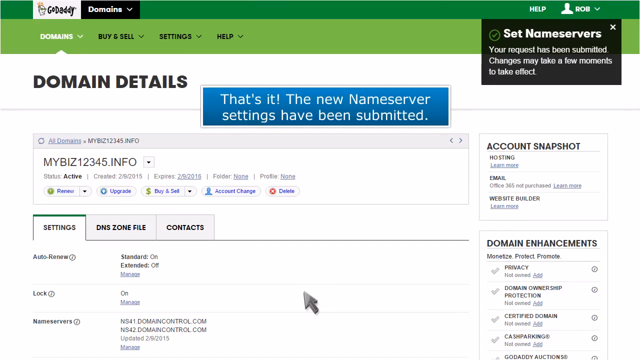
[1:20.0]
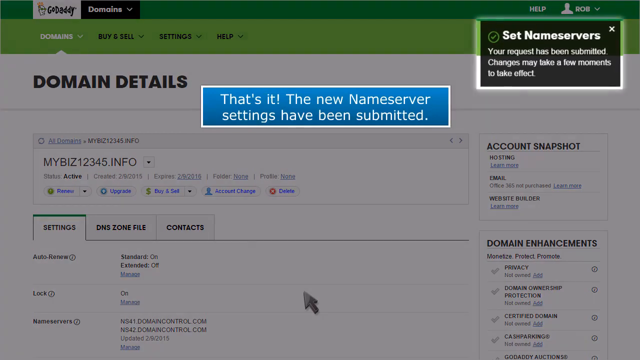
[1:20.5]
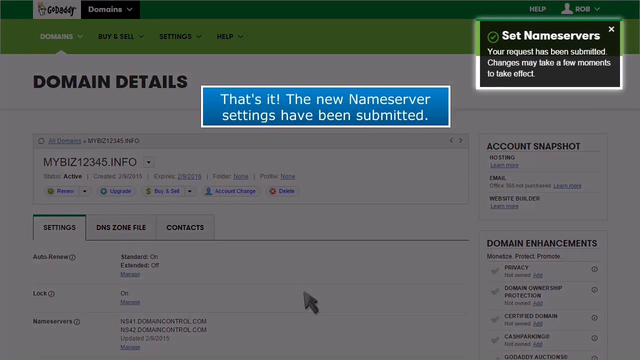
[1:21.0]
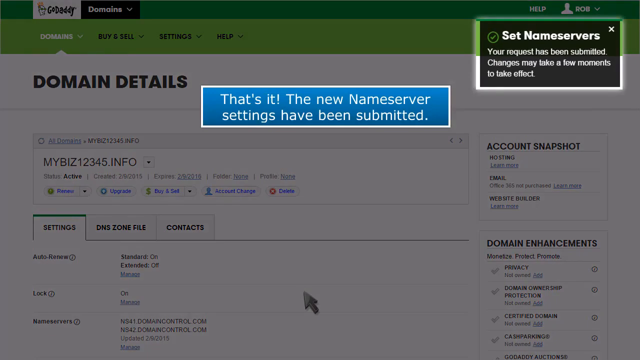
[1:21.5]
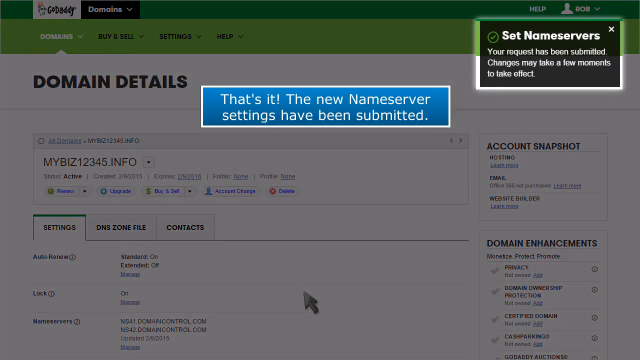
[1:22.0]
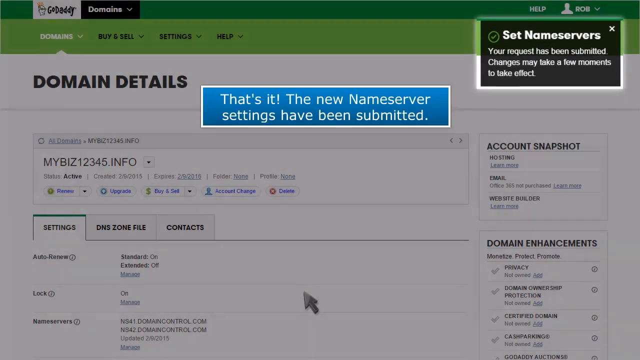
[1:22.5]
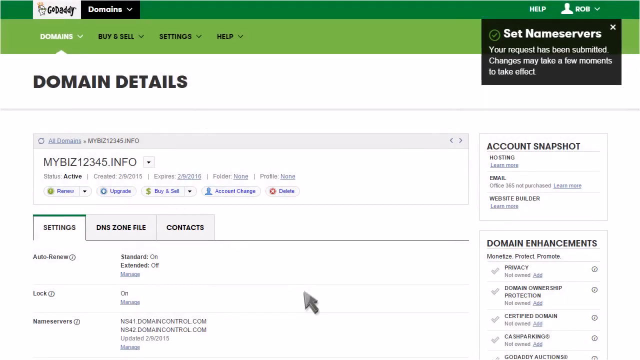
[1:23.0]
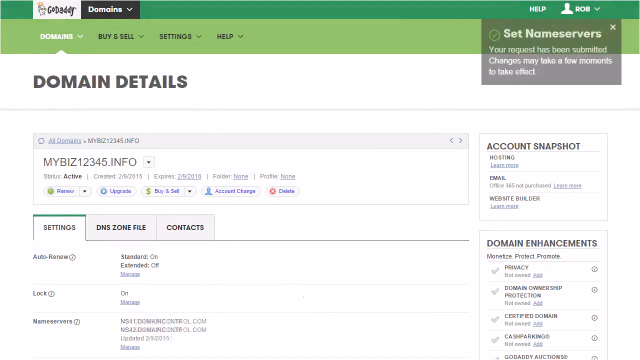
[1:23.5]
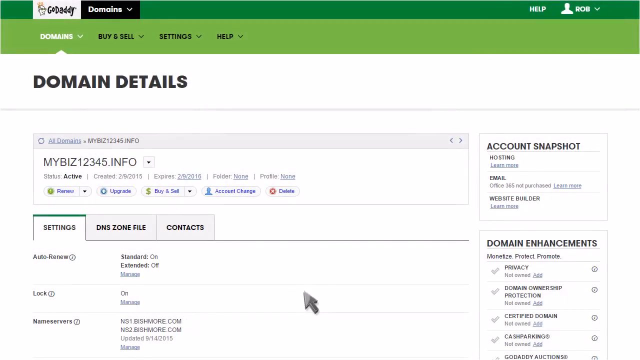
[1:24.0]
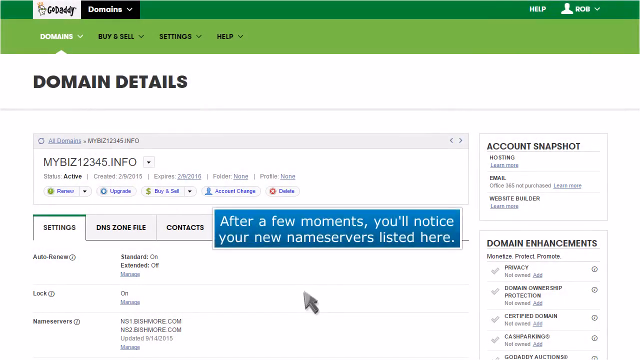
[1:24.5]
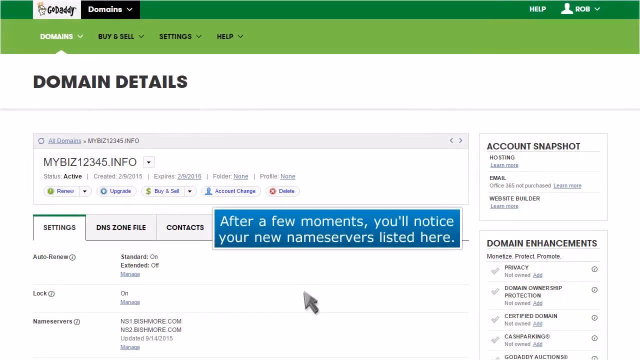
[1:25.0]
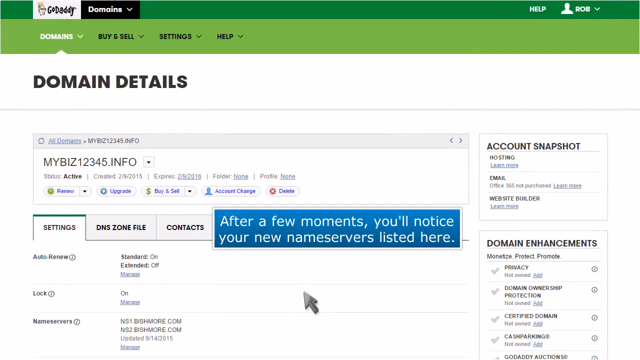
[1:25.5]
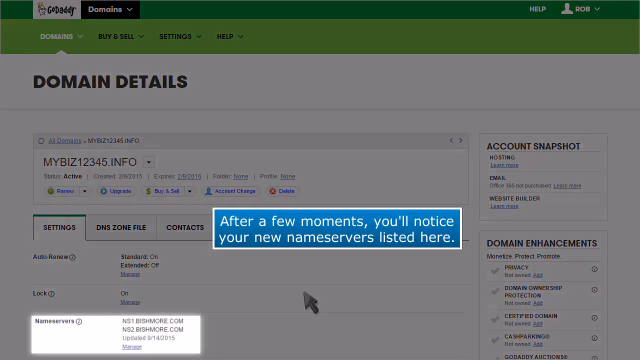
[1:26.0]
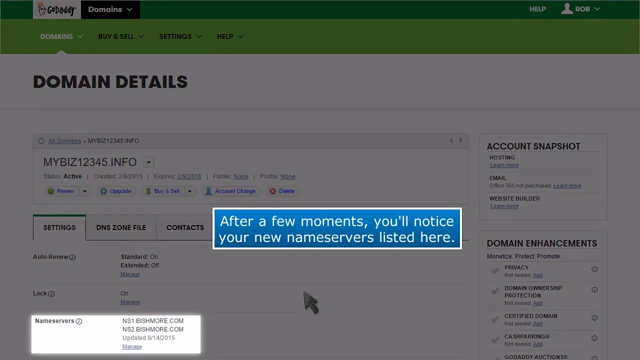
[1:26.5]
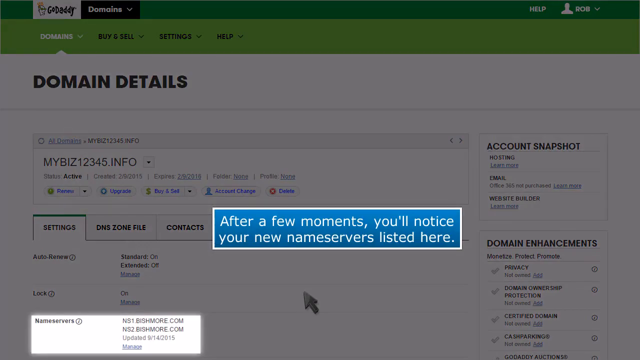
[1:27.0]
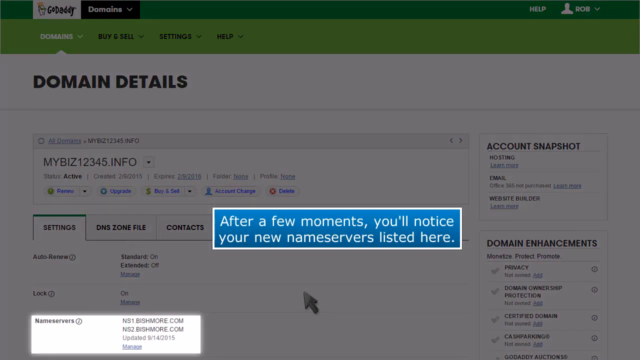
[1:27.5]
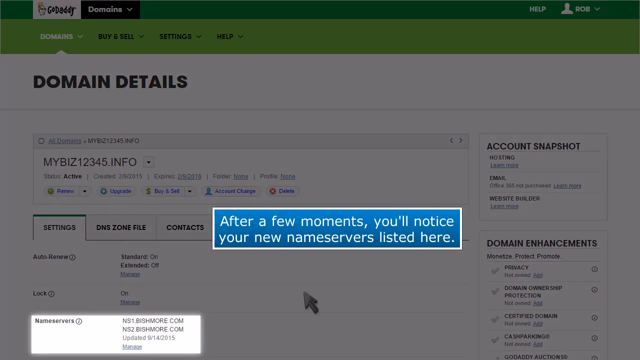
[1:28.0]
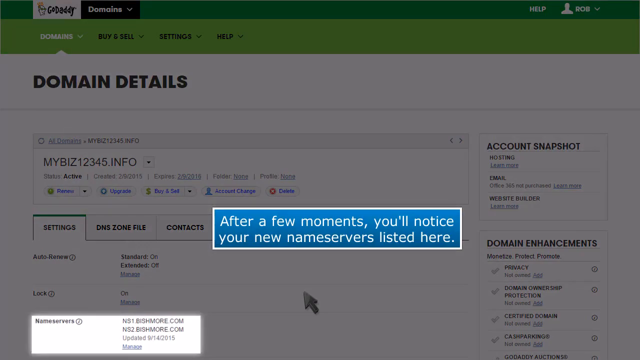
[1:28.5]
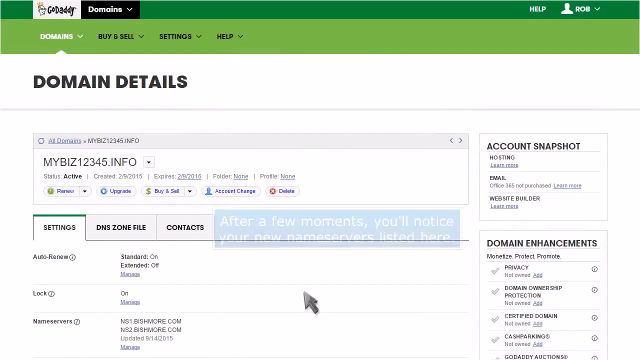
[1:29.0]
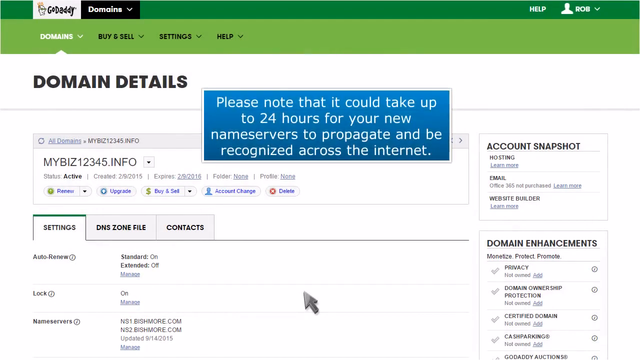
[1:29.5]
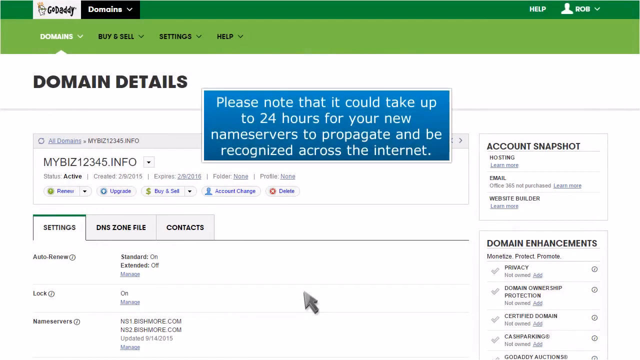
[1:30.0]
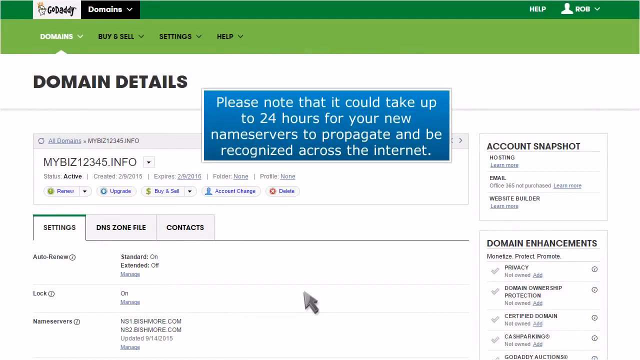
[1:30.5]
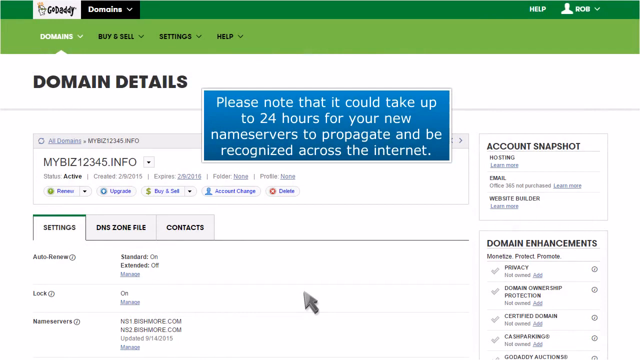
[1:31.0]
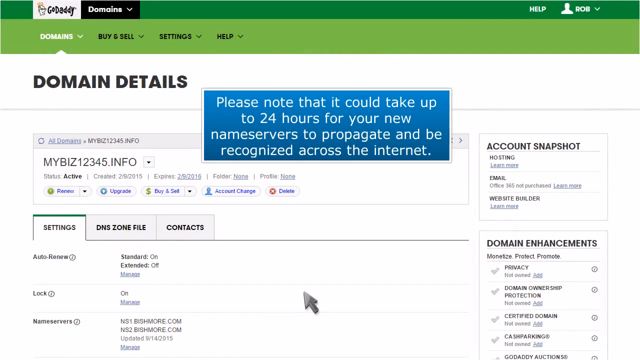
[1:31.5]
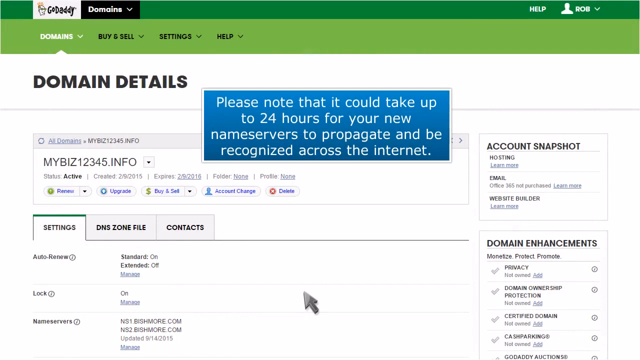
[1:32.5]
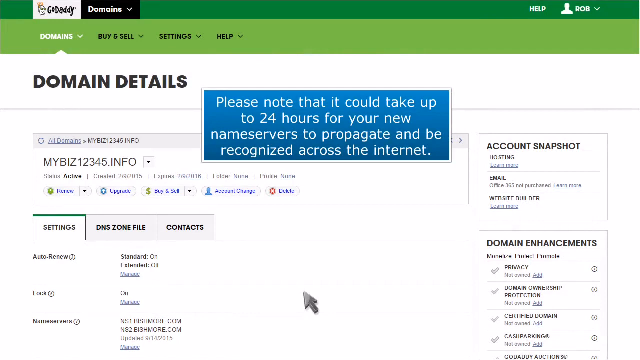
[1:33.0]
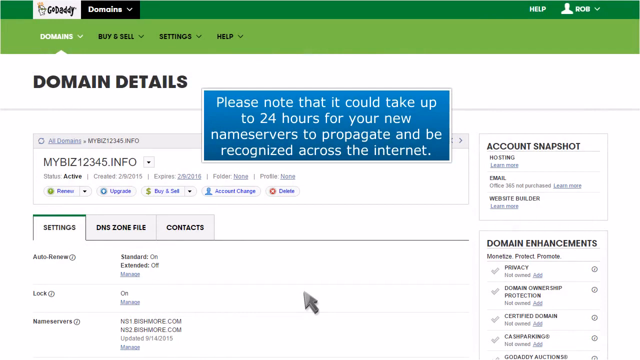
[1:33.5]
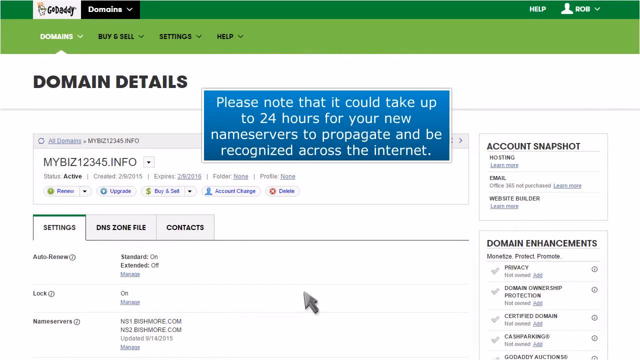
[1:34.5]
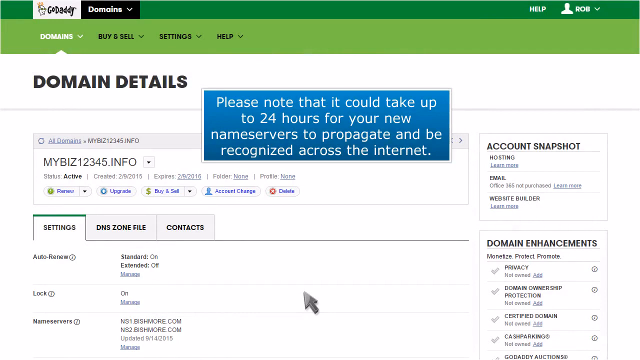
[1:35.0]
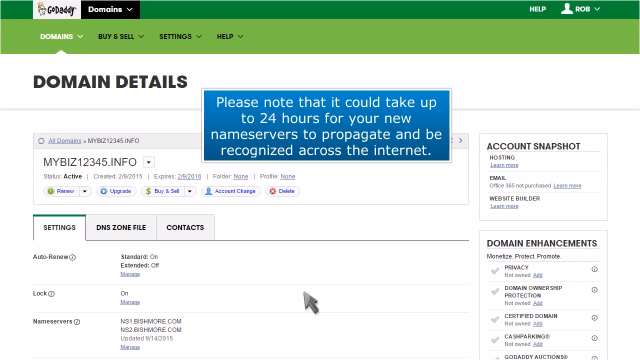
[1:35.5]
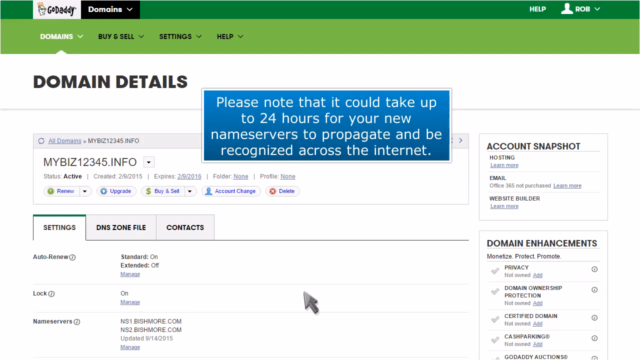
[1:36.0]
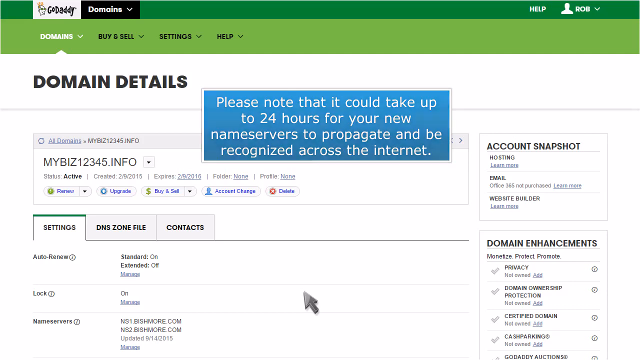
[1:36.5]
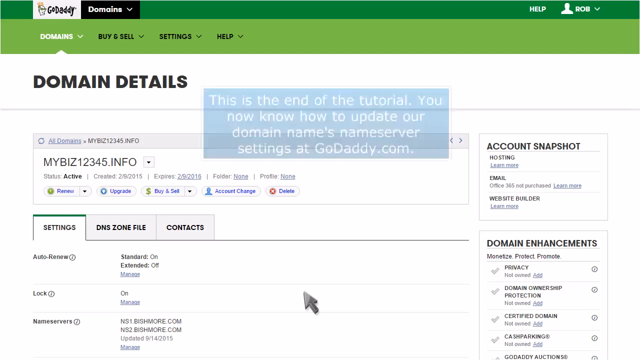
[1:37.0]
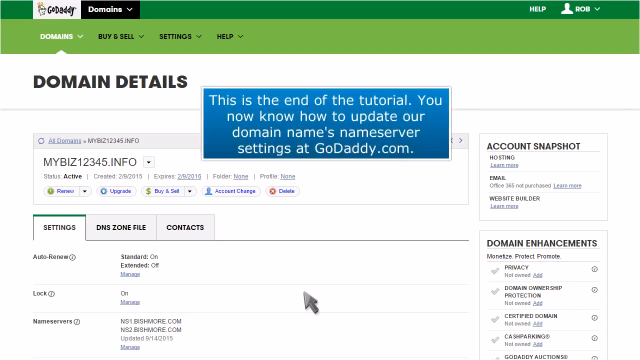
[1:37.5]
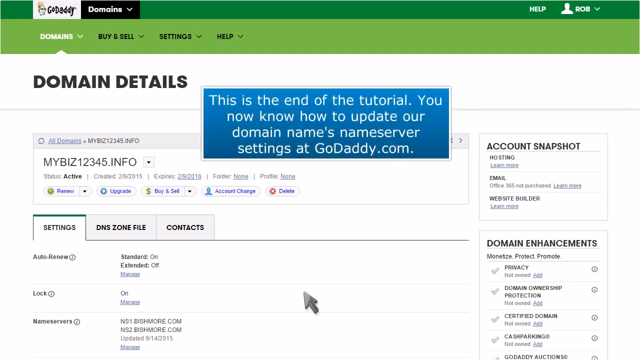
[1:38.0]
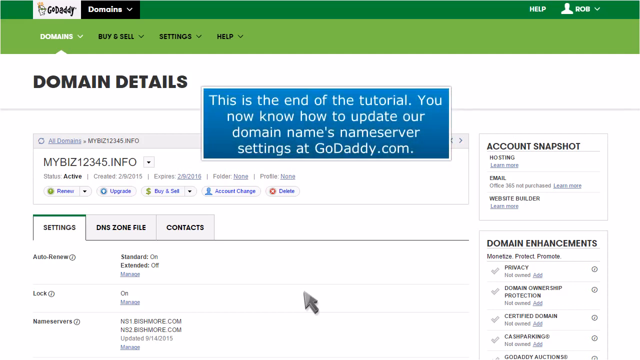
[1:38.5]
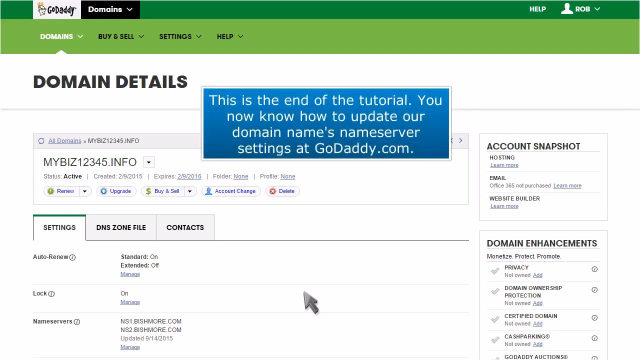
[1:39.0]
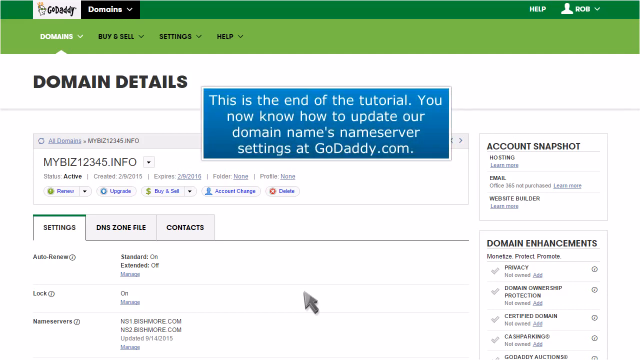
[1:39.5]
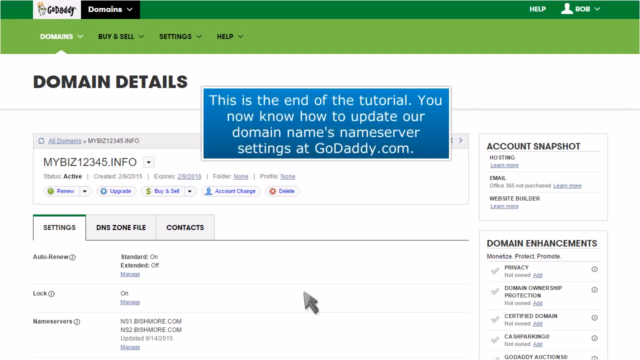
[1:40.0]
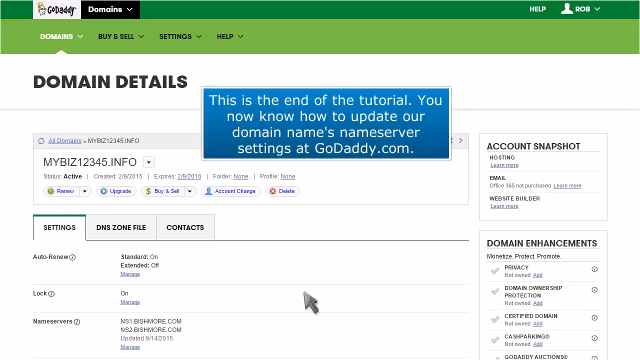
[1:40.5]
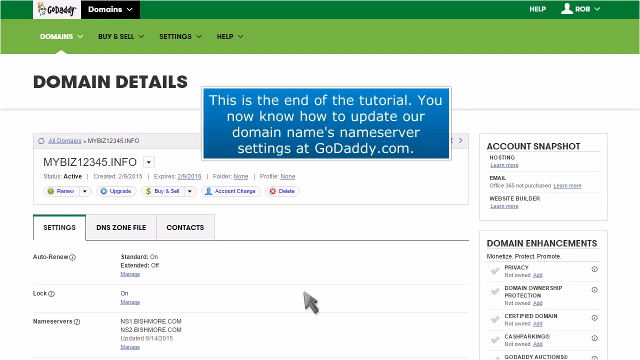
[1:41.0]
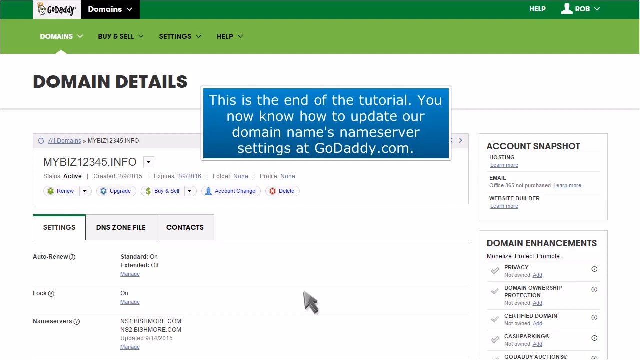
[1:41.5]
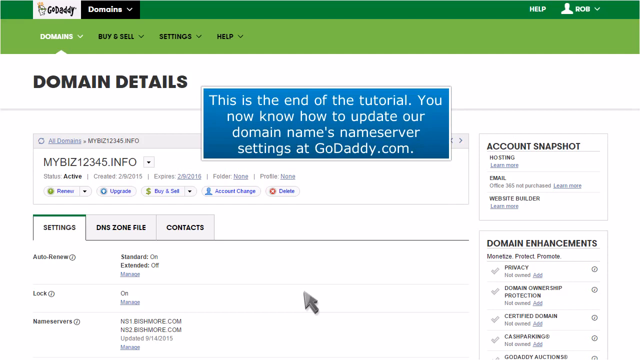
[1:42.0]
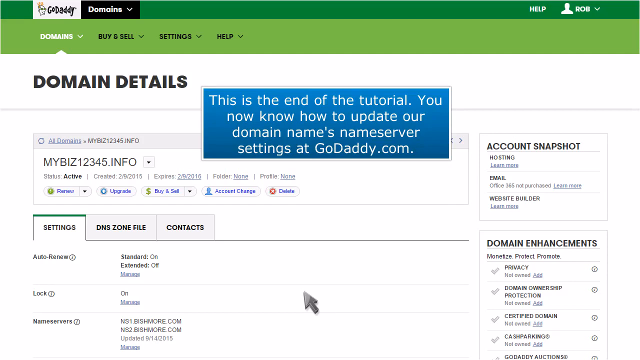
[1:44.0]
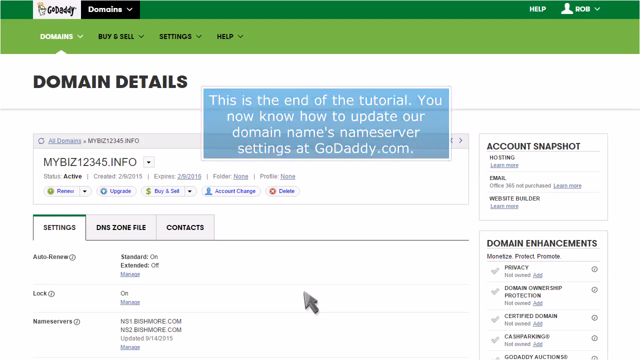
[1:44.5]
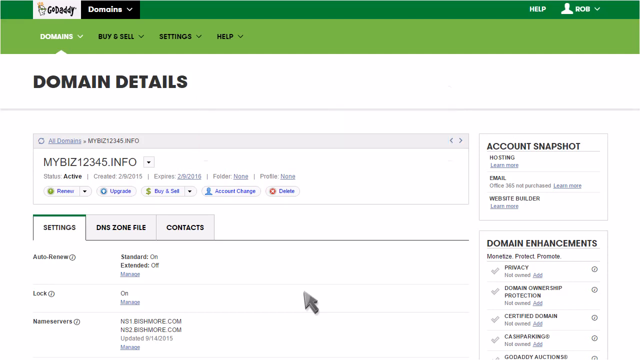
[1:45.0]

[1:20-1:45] After a few moments, the new name servers are listed. A note says it could take up to 24 hours for the new name servers to propagate and be recognized across the internet.